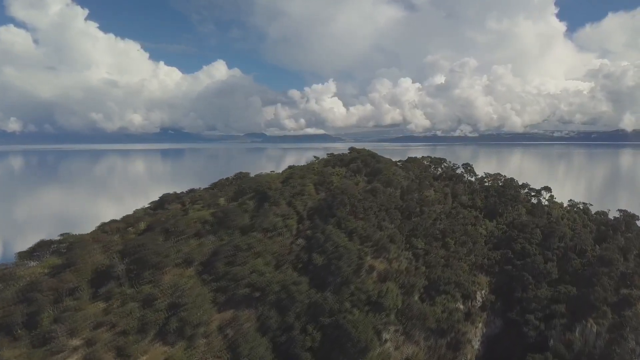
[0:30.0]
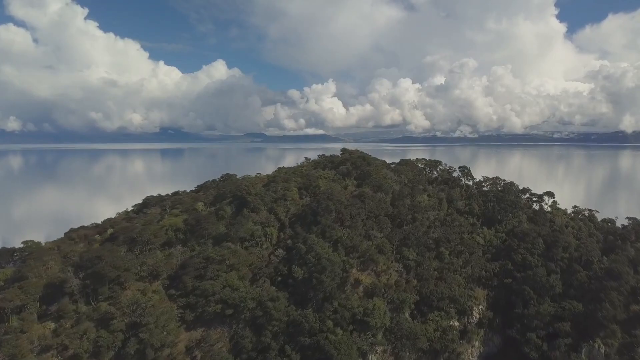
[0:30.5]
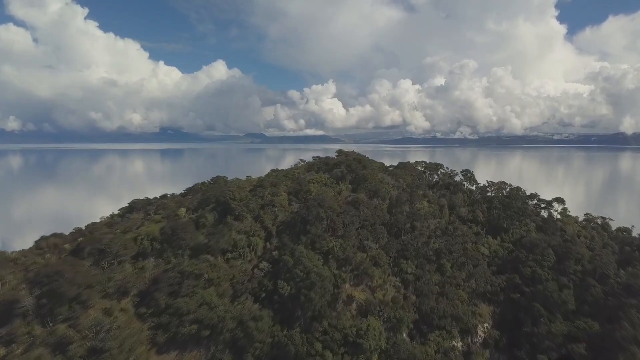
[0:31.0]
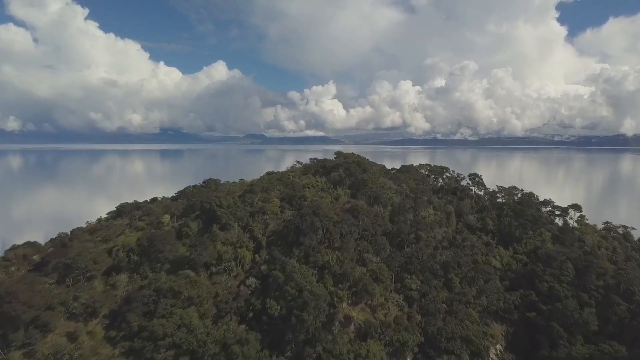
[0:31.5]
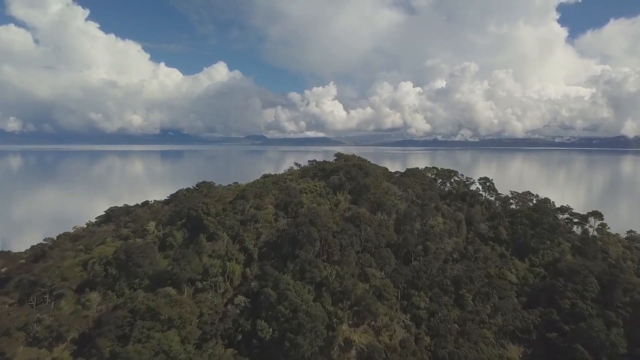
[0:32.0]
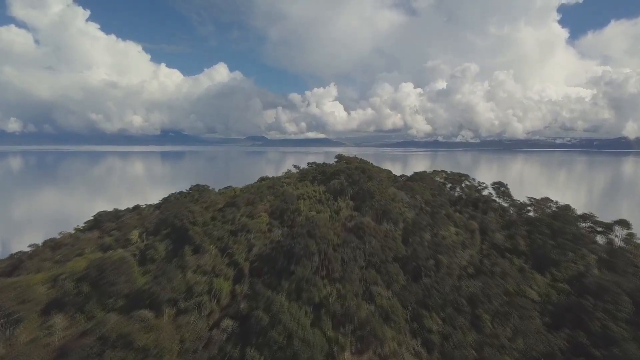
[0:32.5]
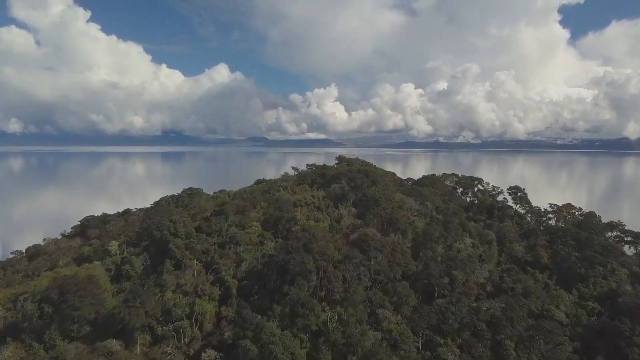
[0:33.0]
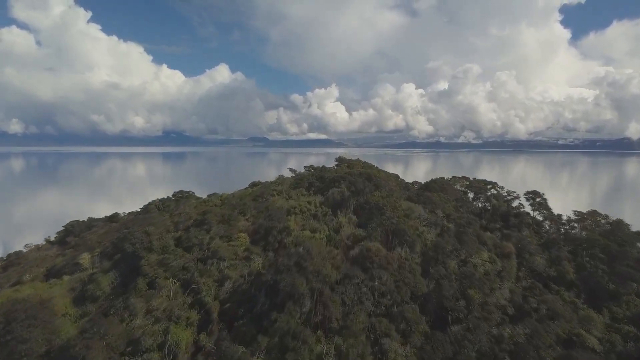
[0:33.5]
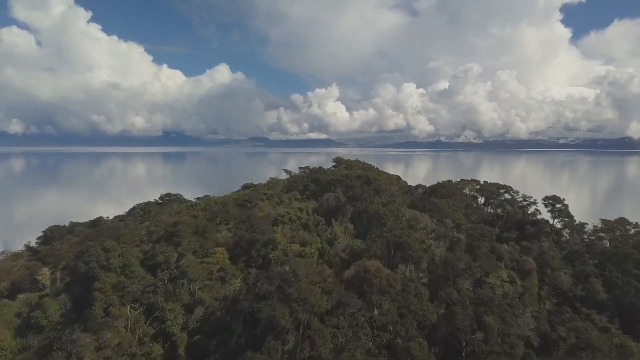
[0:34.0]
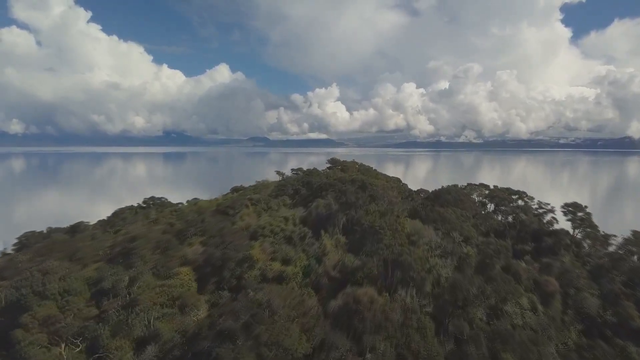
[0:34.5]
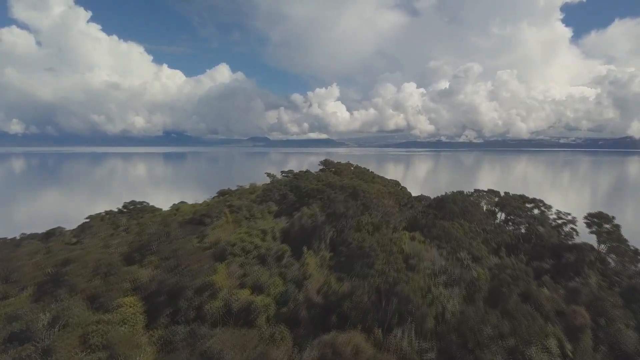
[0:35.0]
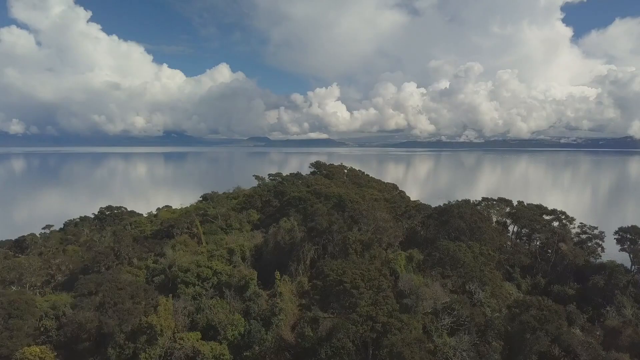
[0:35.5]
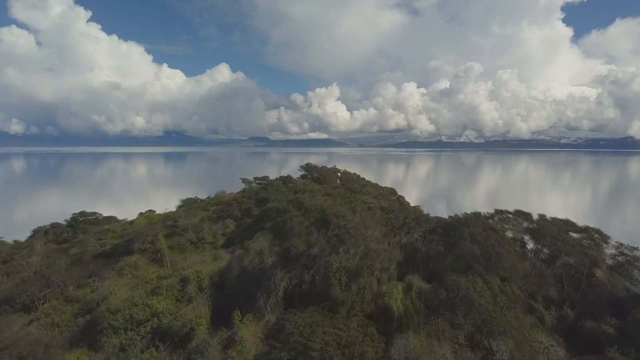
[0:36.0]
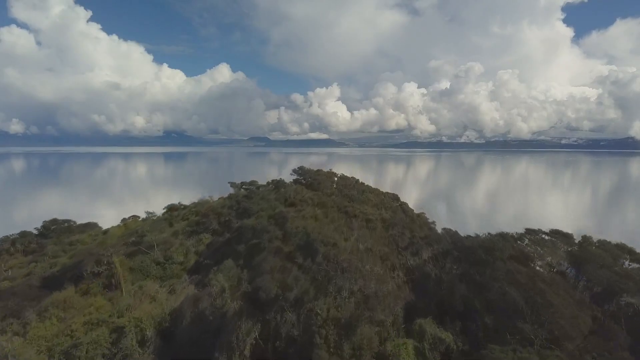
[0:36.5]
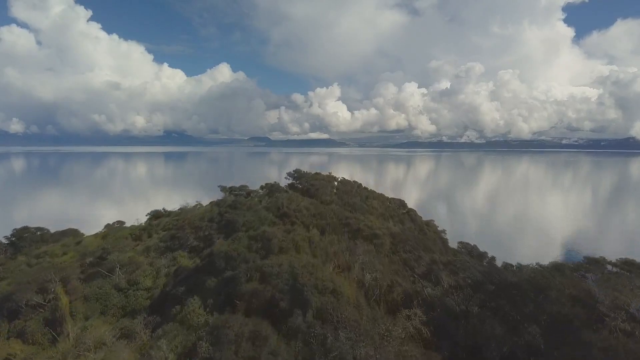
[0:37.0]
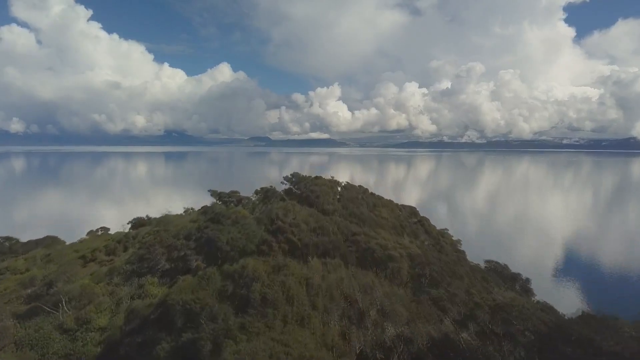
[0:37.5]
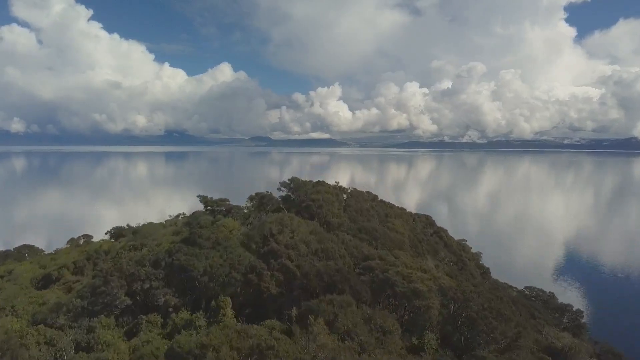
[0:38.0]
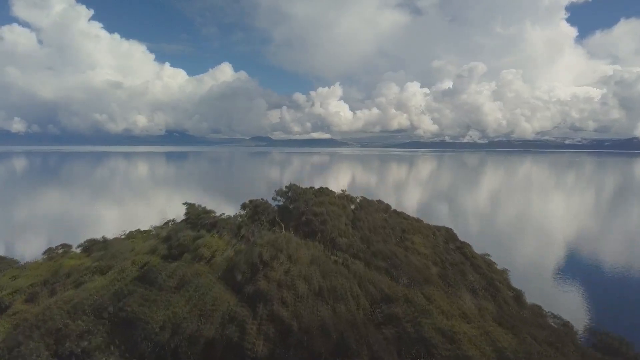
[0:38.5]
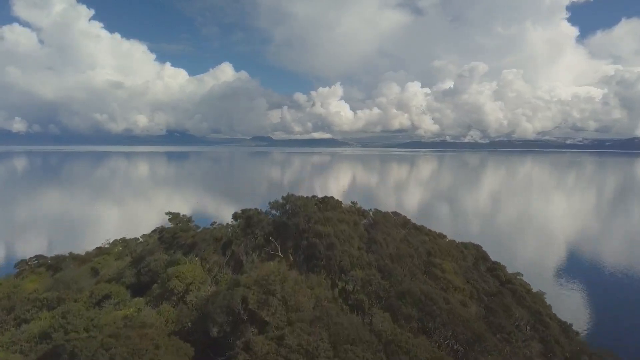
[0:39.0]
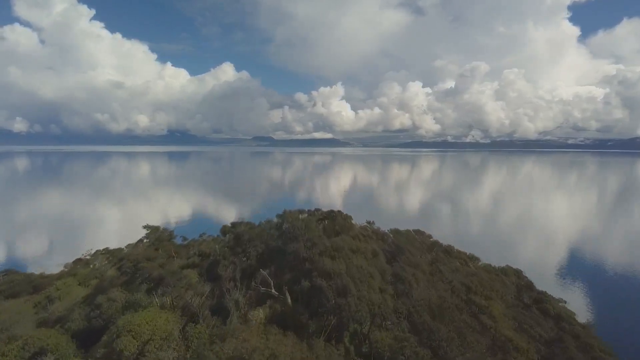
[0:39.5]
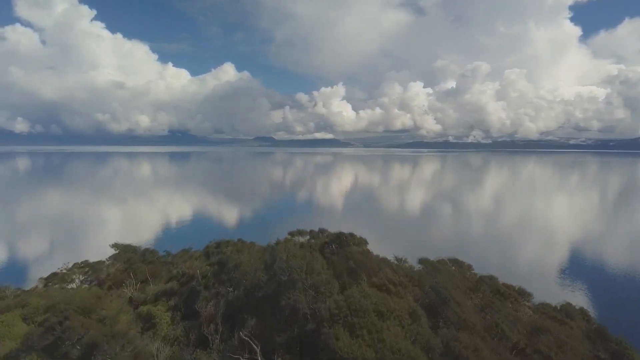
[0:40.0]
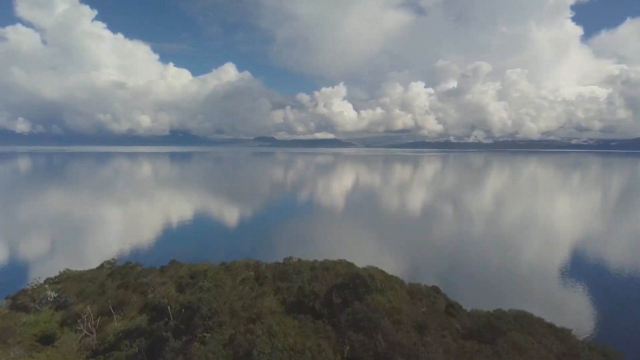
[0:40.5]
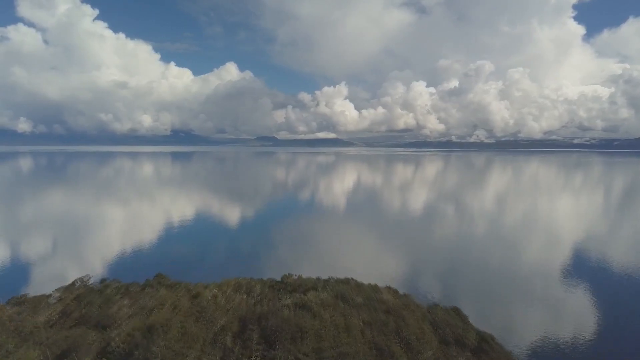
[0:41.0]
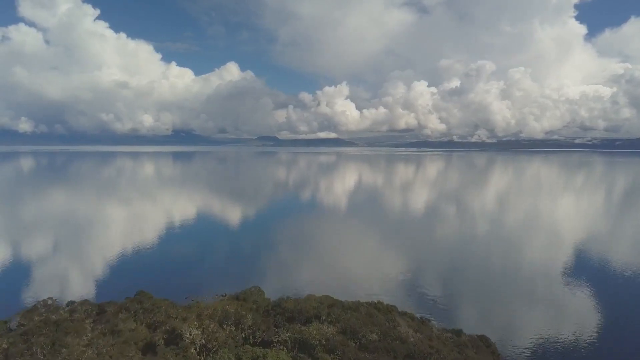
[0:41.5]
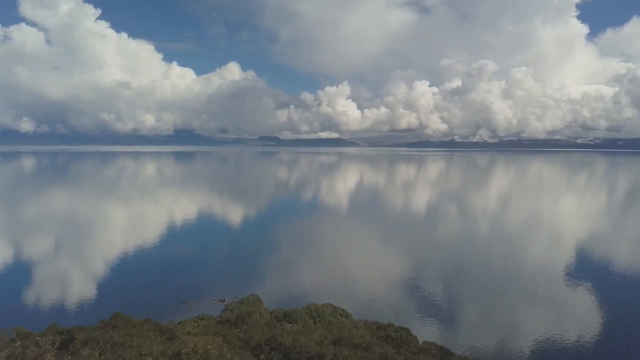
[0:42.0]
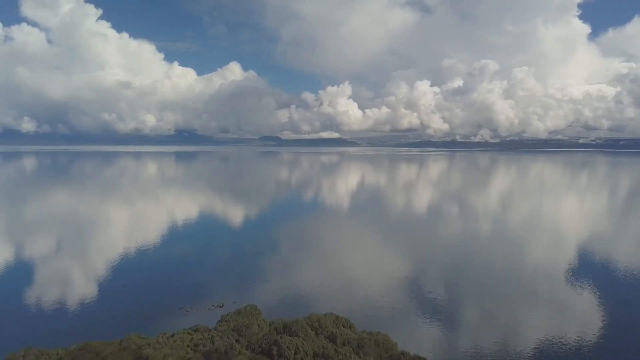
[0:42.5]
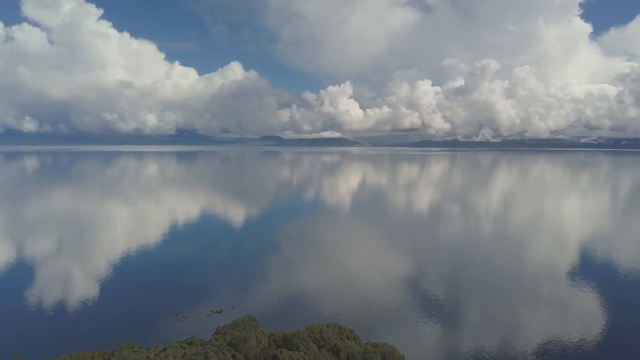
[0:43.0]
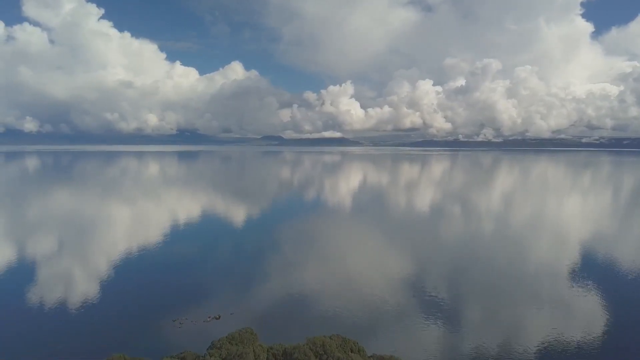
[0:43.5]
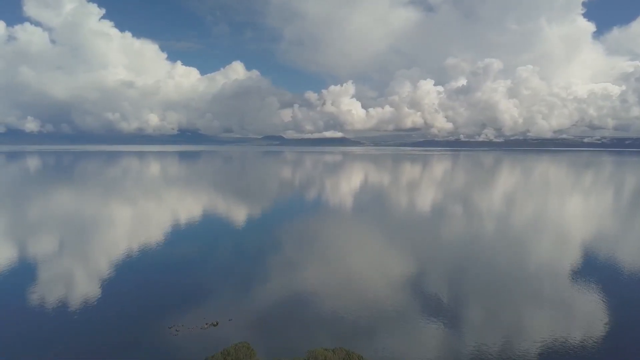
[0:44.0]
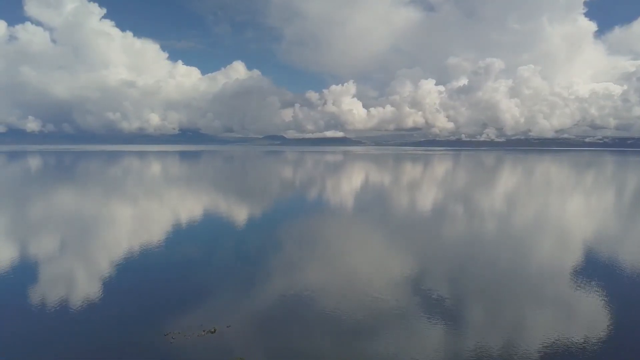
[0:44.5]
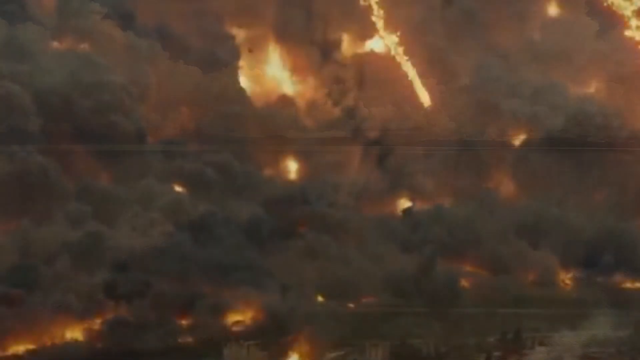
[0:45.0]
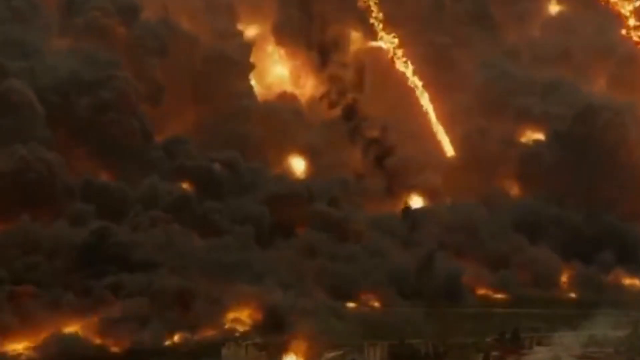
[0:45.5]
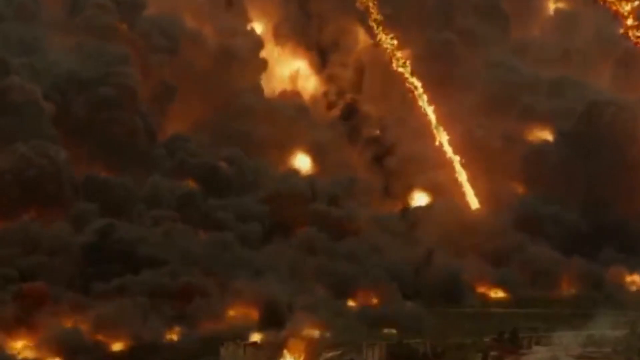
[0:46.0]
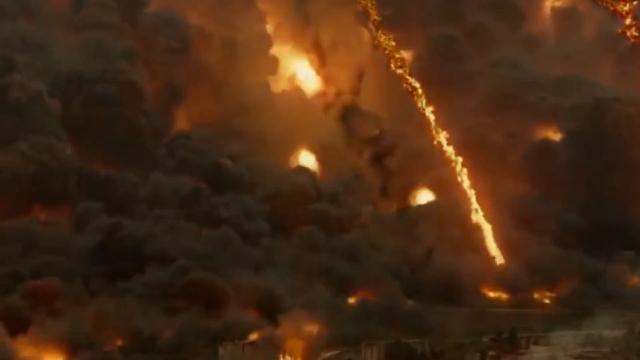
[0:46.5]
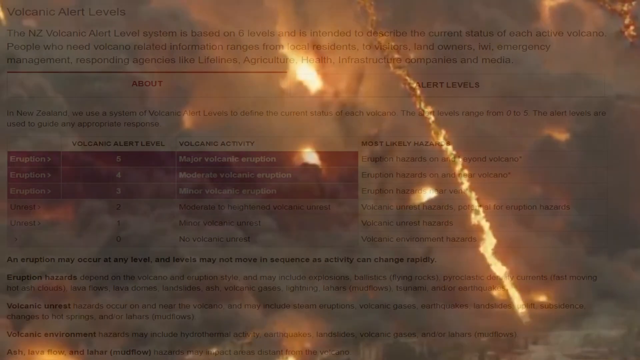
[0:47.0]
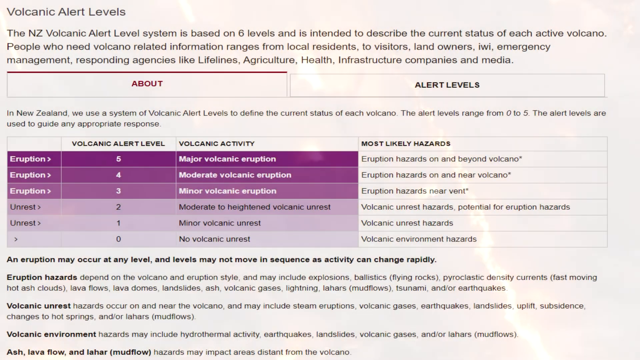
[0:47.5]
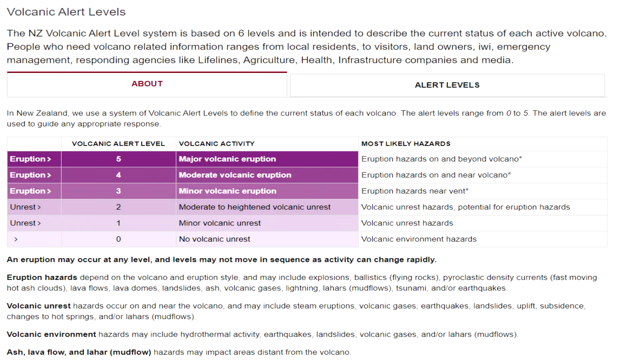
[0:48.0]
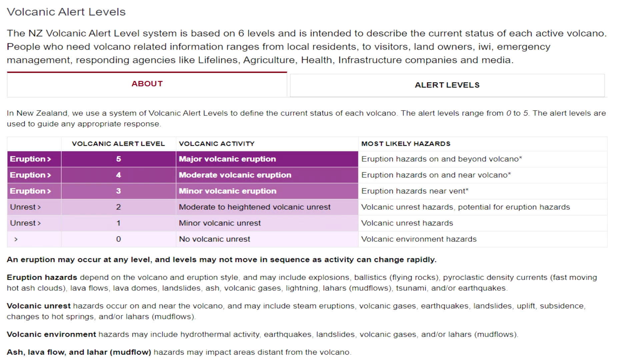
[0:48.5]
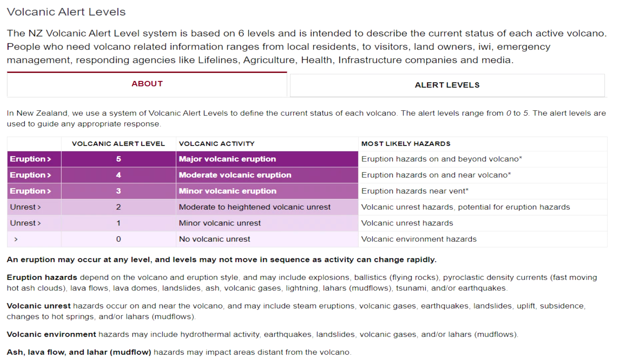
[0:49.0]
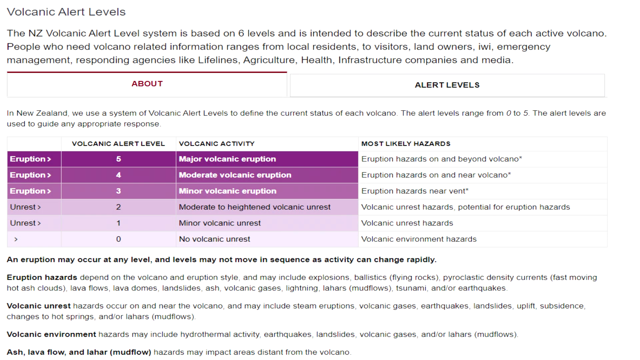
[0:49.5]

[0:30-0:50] The camera continues flying slowly over the volcano, appearing to be at its very top, overlooking a lot of trees and a thick canopy. It finally passes over the volcano, leaving a view of the ocean, which is very still with no visible waves or turbulence. The video then transitions to what appears to be a close-up of the volcano erupting: a lot of soot and ash, with a couple of bright orange streaks of rock and magma contrasting against the black and gray of the rest of the volcano. Next comes a chart that looks to be from the website, showing the difference between volcanic activity levels, ranging from 0, no volcanic unrest, to 5, major volcanic eruption.